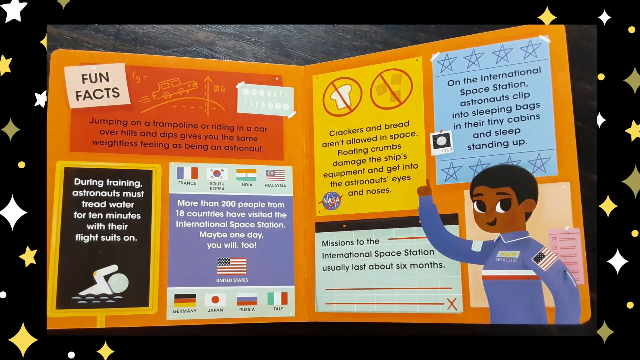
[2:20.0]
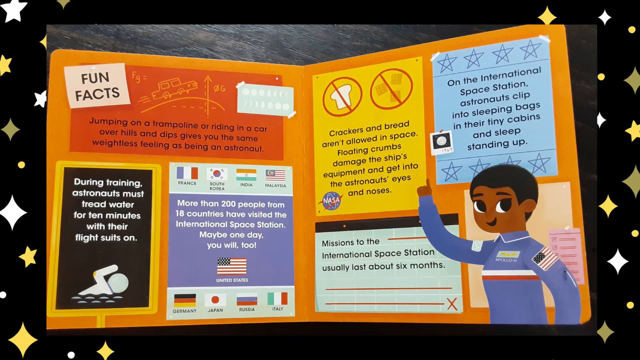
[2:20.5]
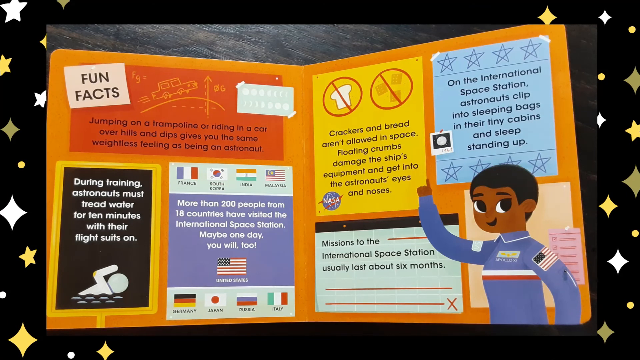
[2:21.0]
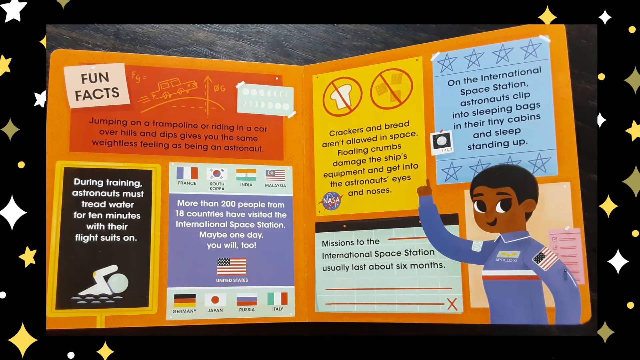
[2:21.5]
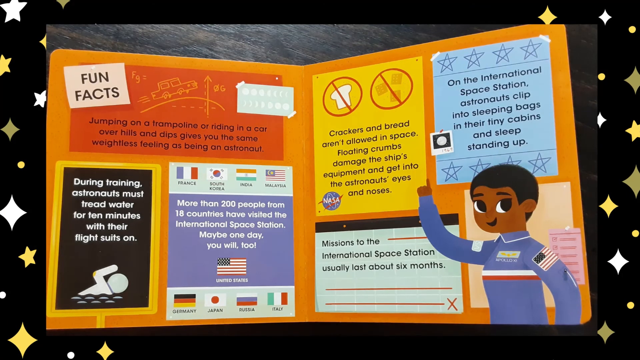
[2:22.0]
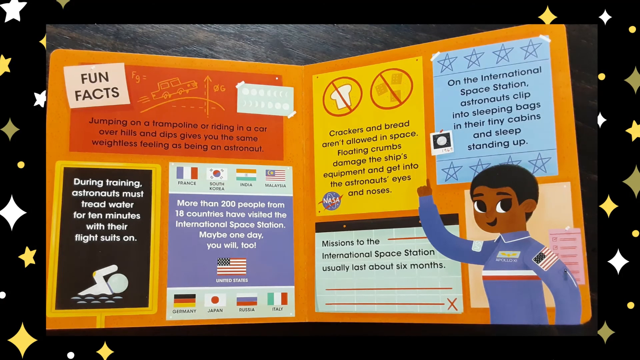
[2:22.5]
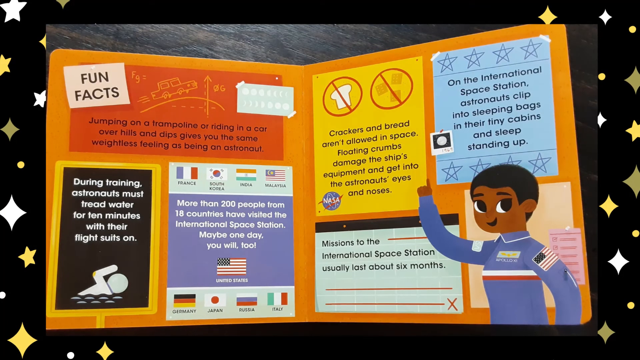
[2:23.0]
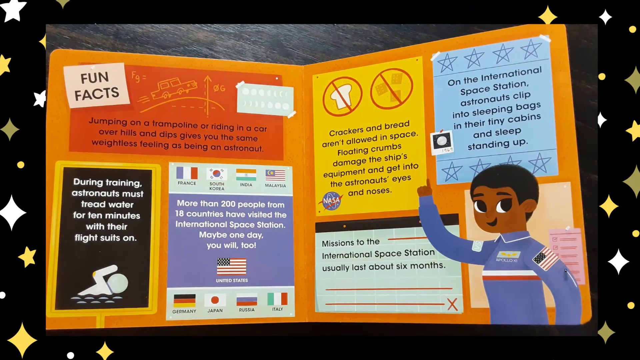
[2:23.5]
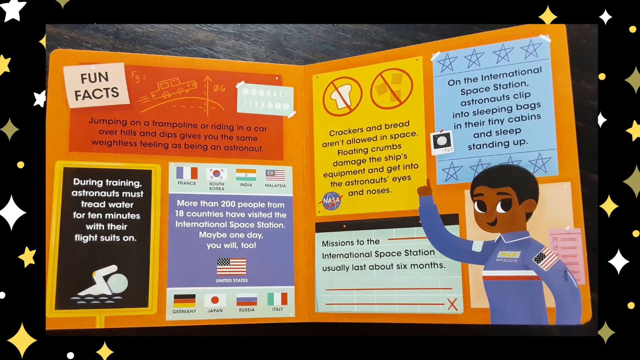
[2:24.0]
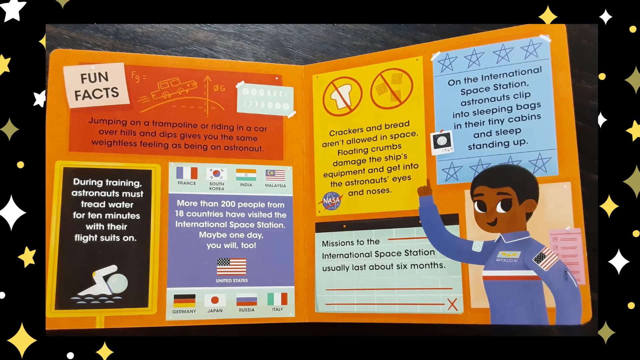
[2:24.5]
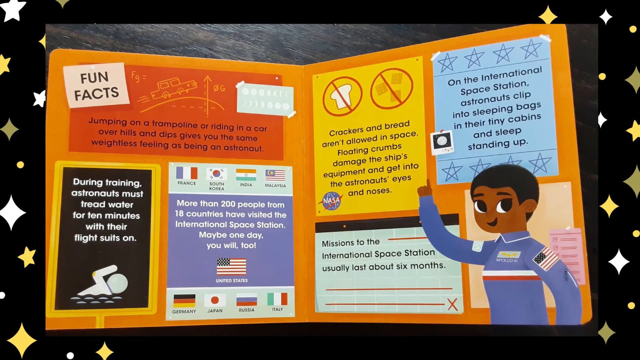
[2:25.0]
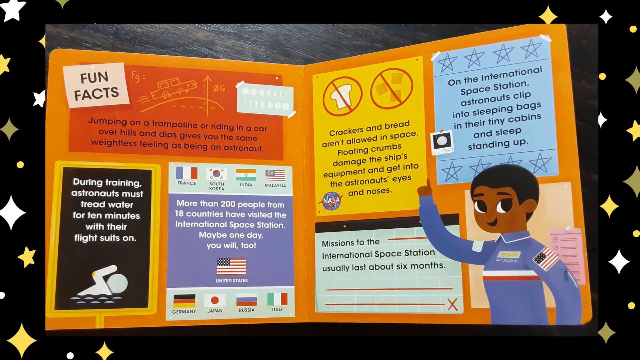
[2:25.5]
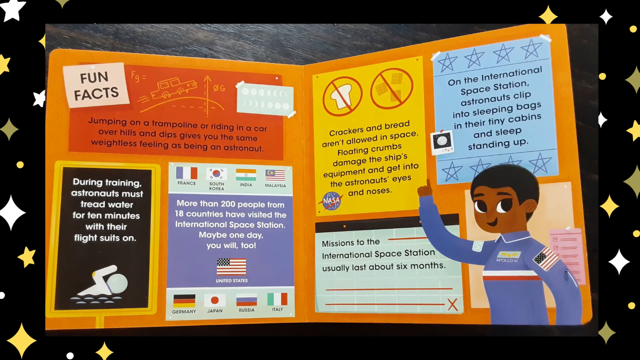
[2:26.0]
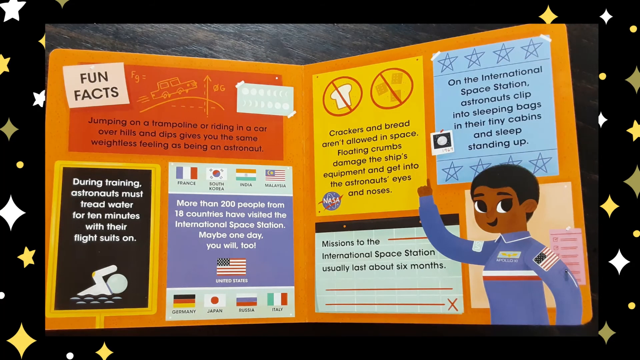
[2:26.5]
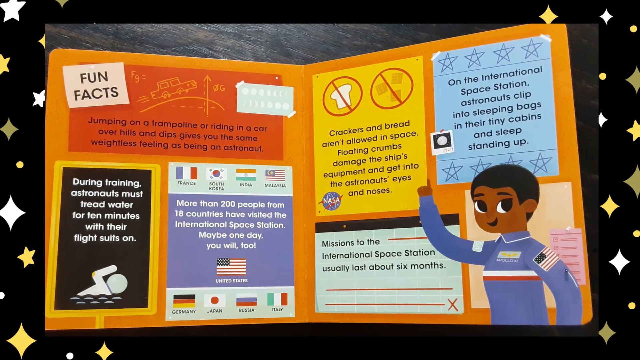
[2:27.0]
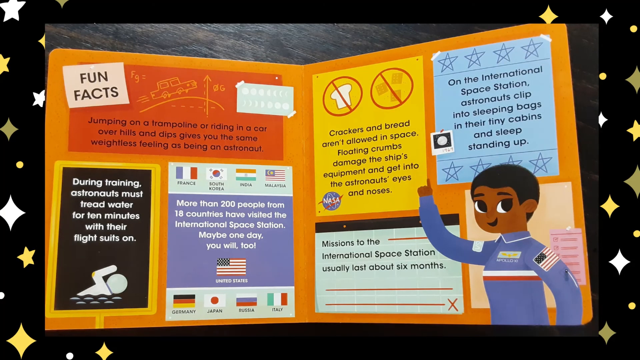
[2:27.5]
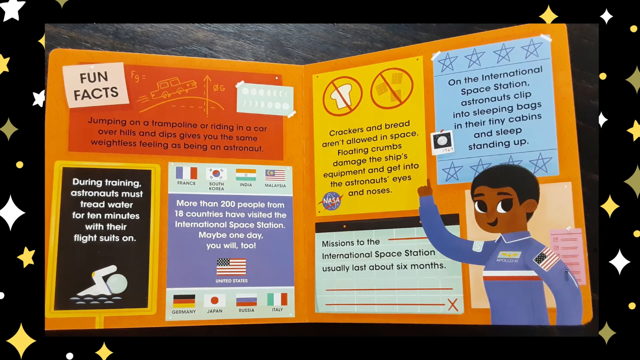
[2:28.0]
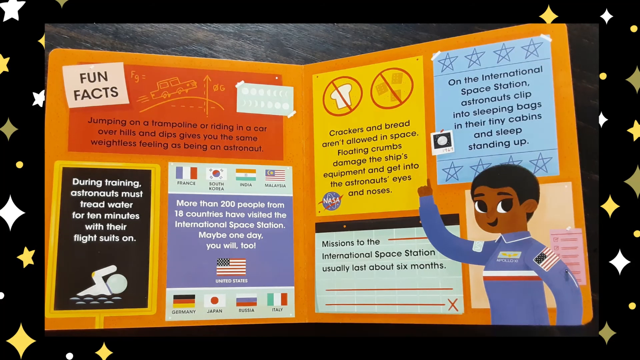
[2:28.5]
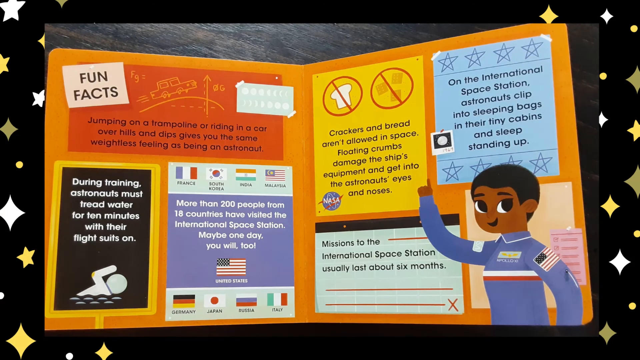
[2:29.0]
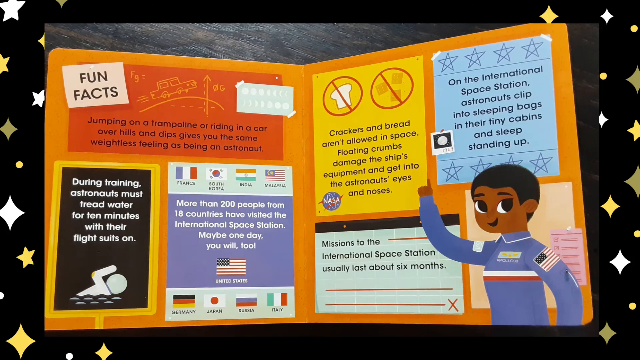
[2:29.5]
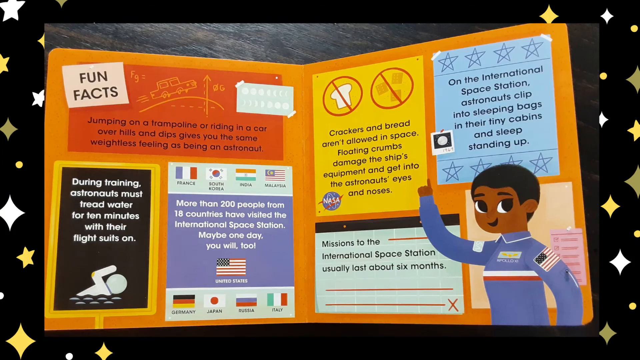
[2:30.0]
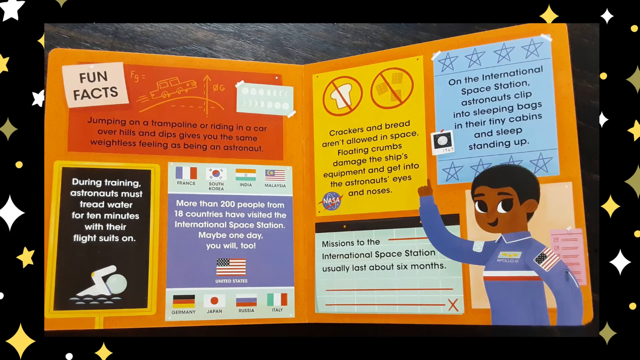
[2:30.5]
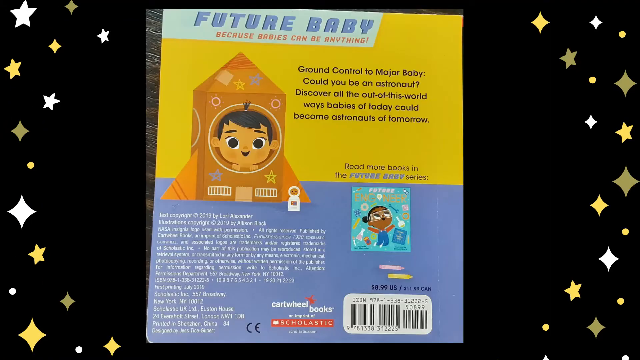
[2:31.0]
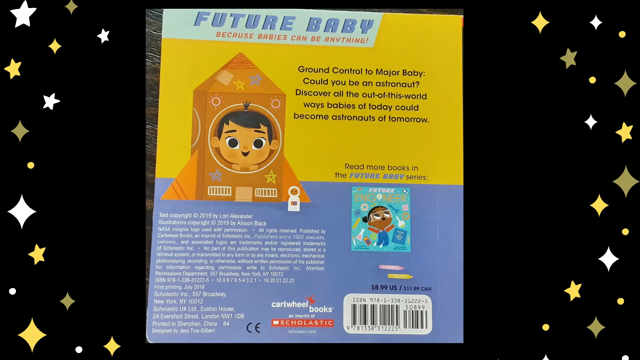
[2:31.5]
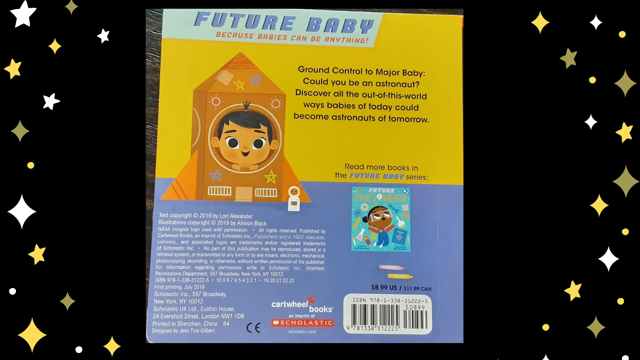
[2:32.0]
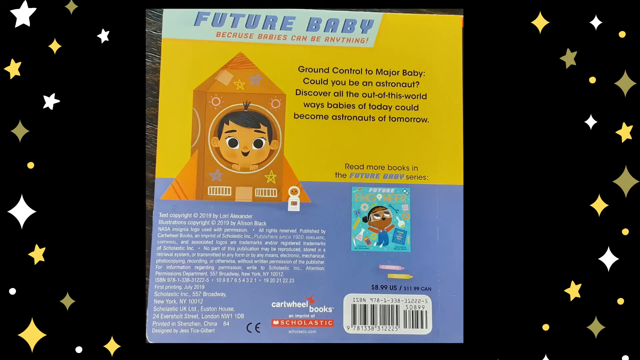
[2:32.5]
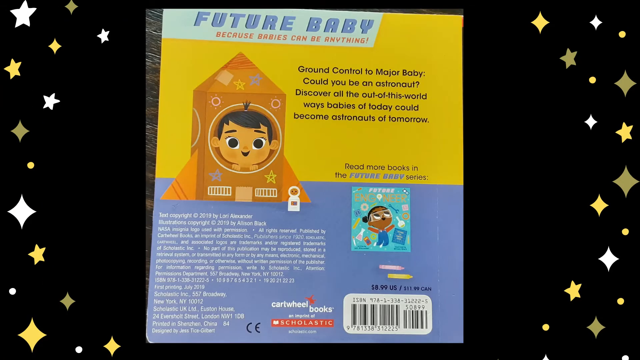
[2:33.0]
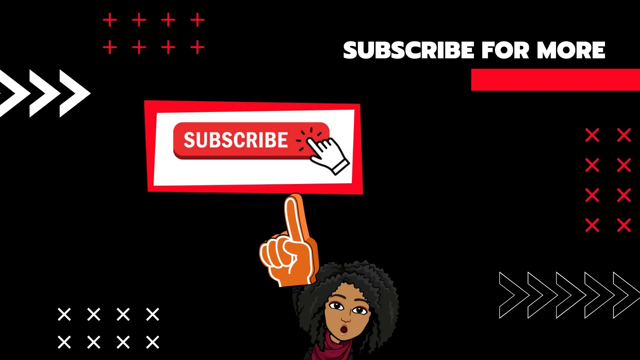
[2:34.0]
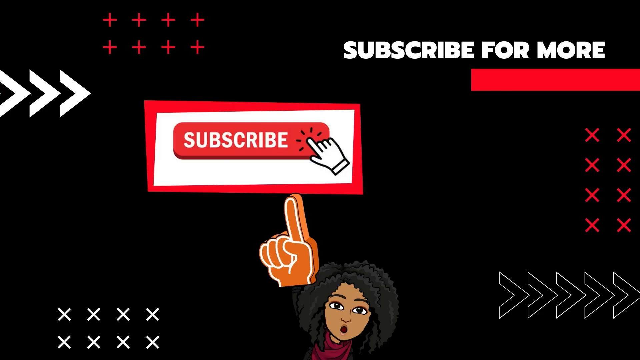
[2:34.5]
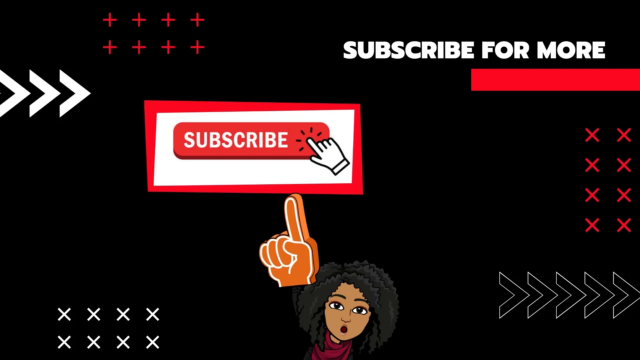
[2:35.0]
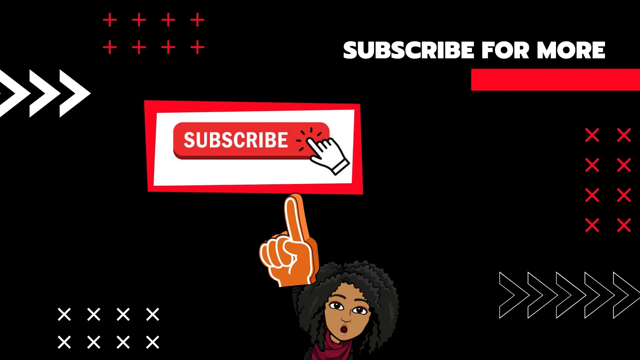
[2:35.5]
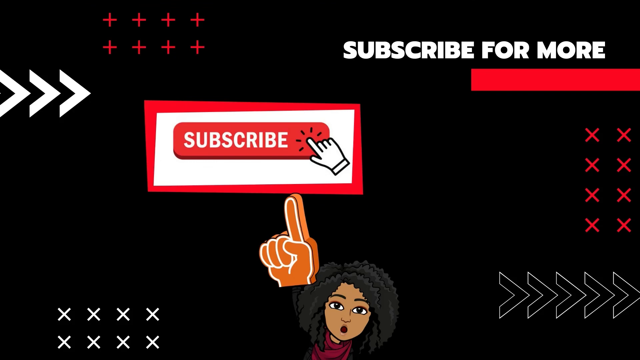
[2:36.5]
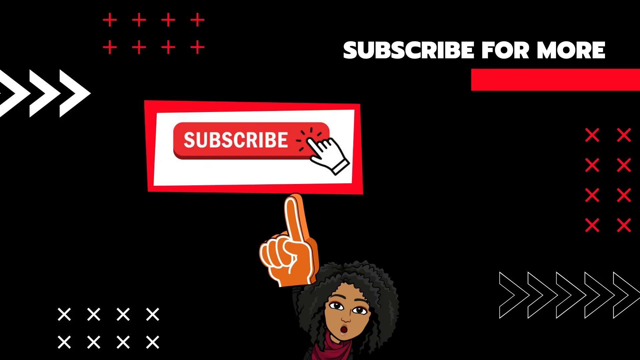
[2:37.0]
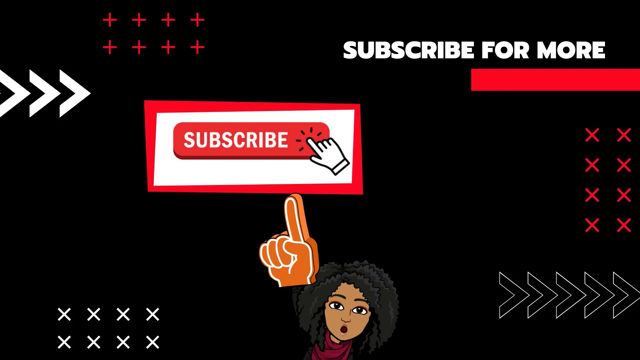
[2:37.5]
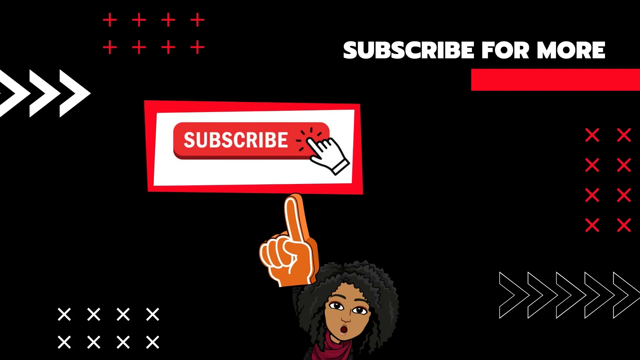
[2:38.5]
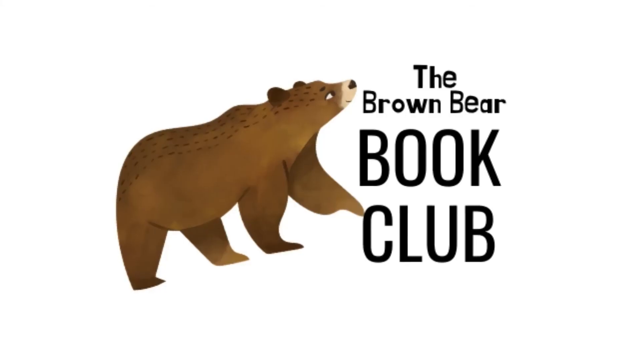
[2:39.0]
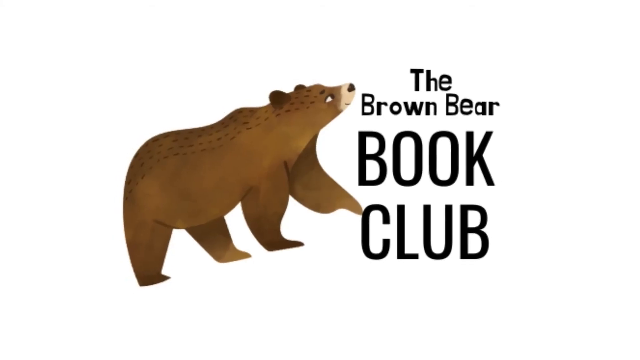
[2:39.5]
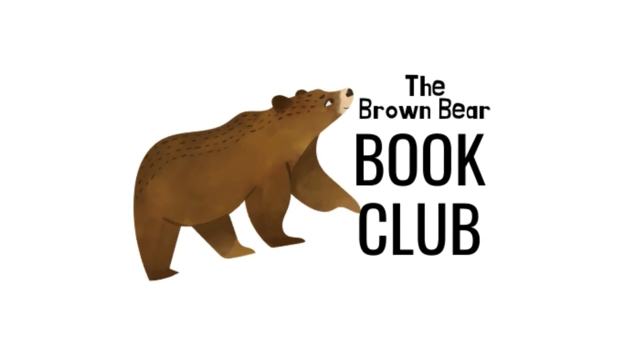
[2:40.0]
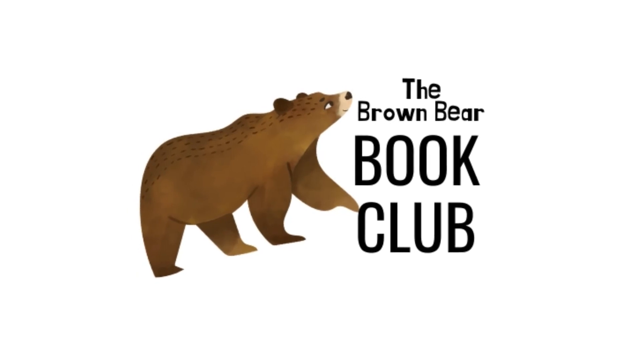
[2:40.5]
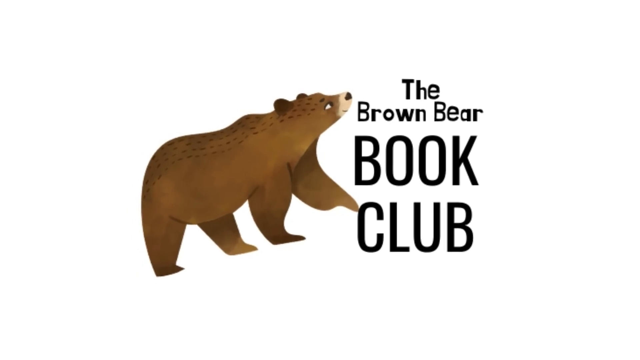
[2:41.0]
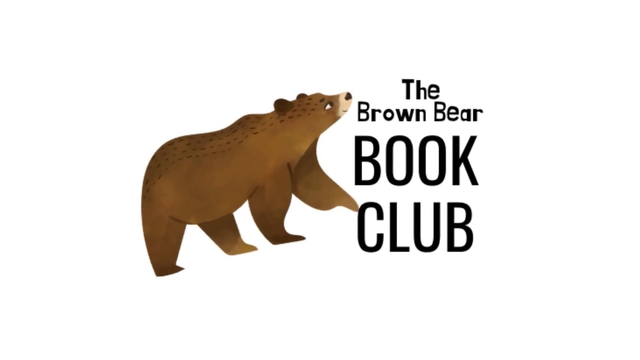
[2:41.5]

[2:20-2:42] The same background with an astronaut and seven boxes changes to another screen with a background reading "future baby", showing a baby in a small rocket box. It seems like the back of the book, with everything written about the book's name, registration and publication. "Future baby" is in capital letters in a big font, and "babies can be anything" is in orange and blue font. Text in black on a yellow background reads "discover all the out of this world ways babies of today could become astronauts of tomorrow". Text reading "read more books" appears. "Subscribe for more" is up above, with a subscribe button and a hand indicating it, and the person who was reading earlier is also there.